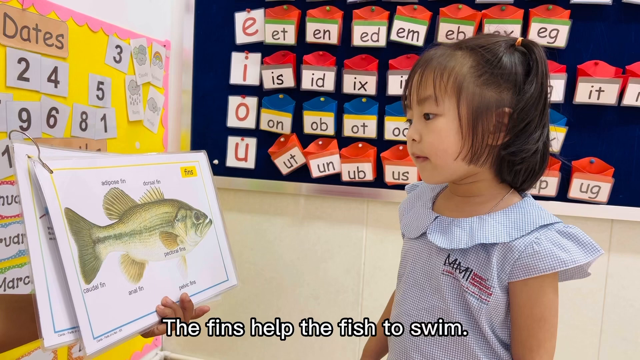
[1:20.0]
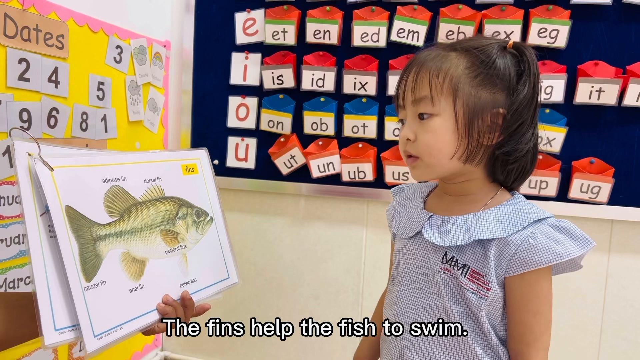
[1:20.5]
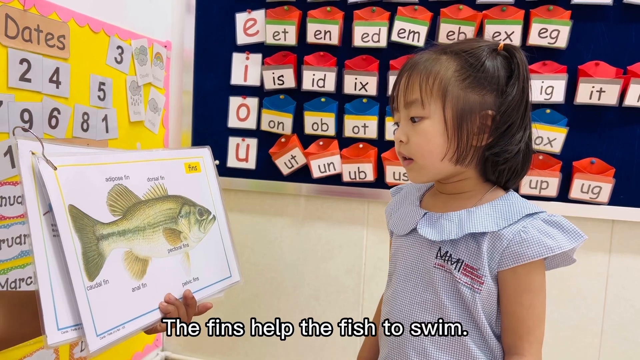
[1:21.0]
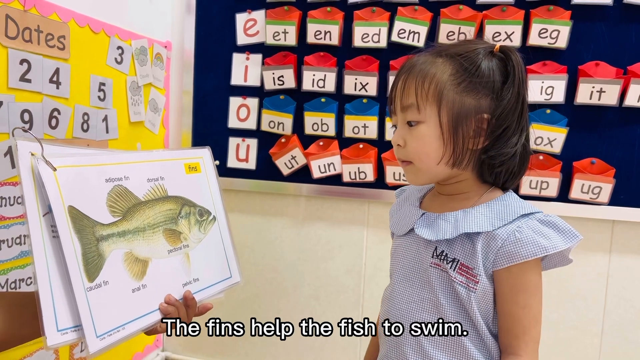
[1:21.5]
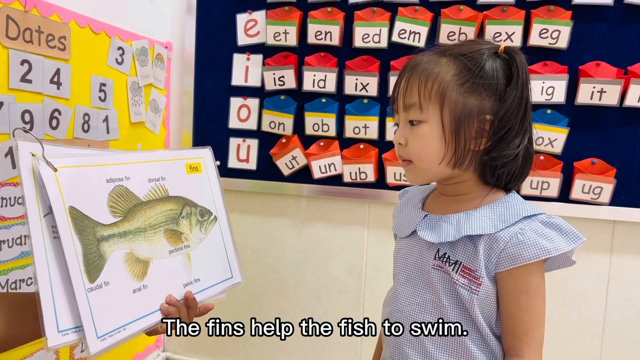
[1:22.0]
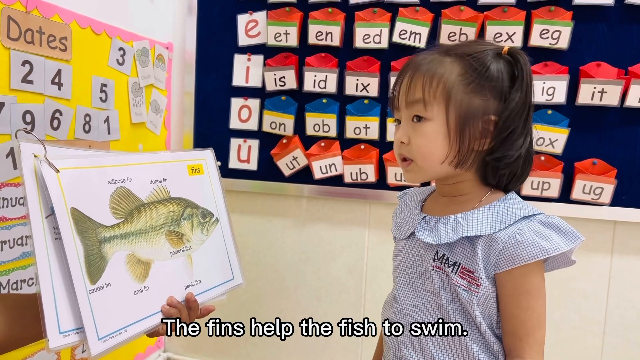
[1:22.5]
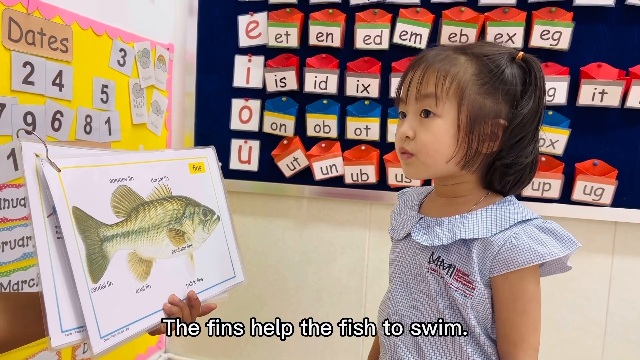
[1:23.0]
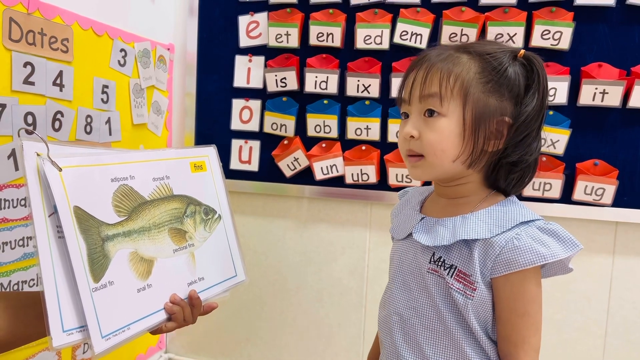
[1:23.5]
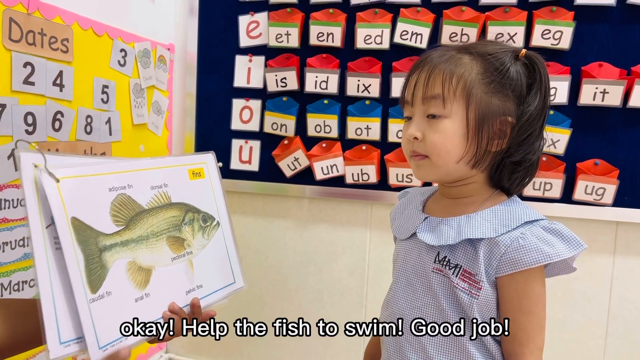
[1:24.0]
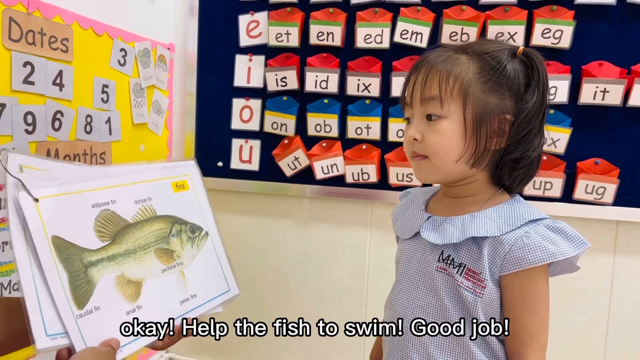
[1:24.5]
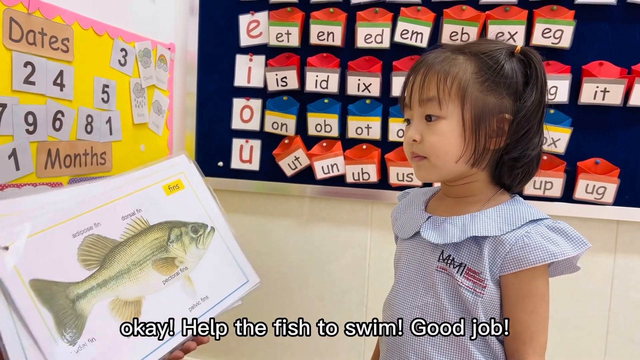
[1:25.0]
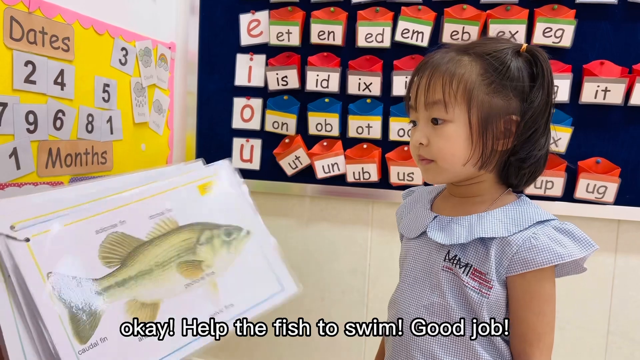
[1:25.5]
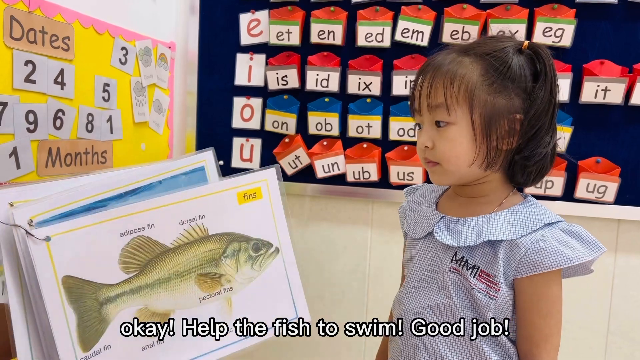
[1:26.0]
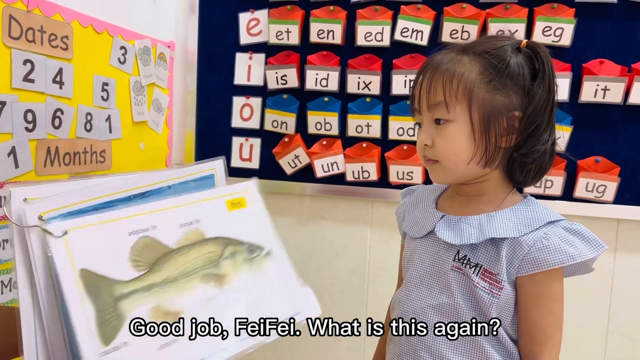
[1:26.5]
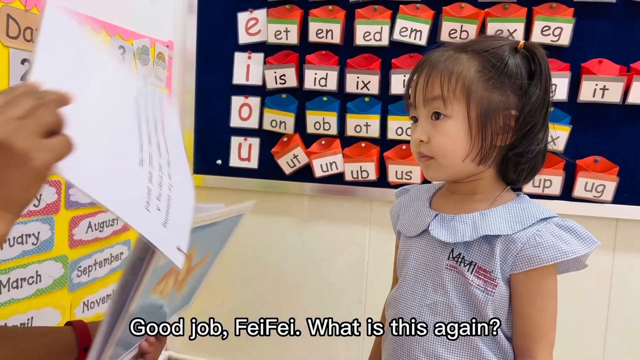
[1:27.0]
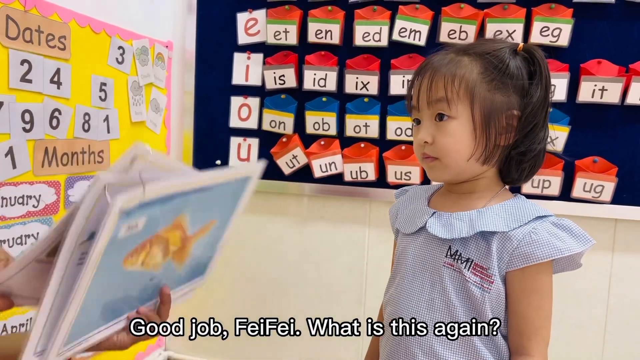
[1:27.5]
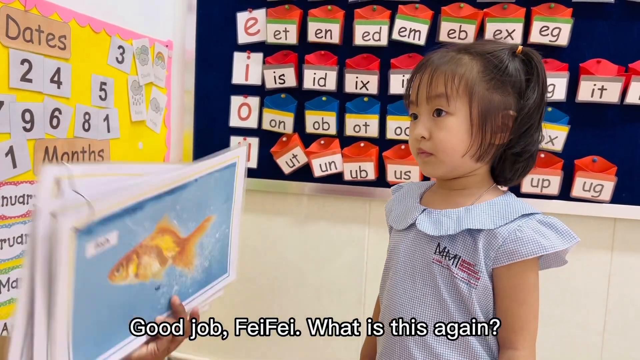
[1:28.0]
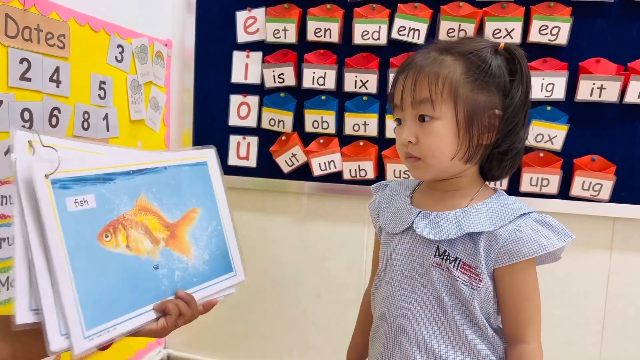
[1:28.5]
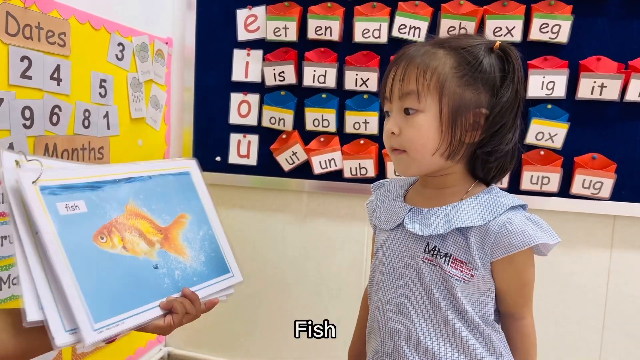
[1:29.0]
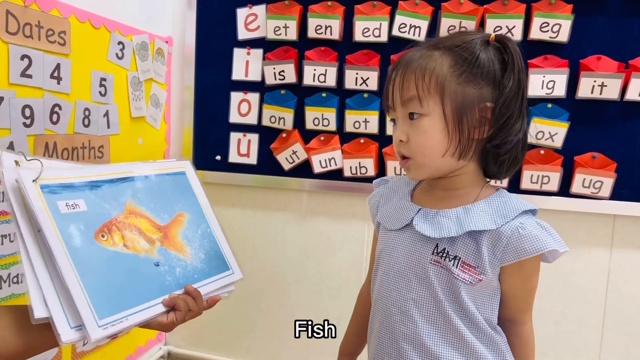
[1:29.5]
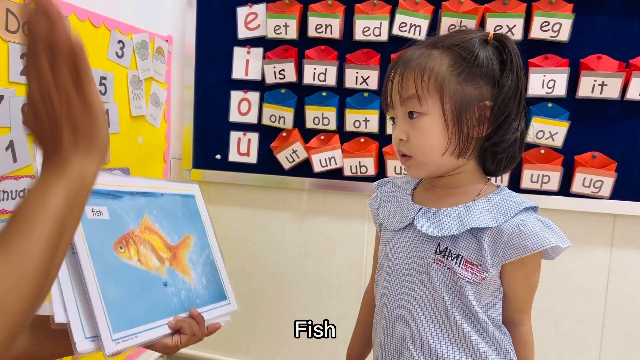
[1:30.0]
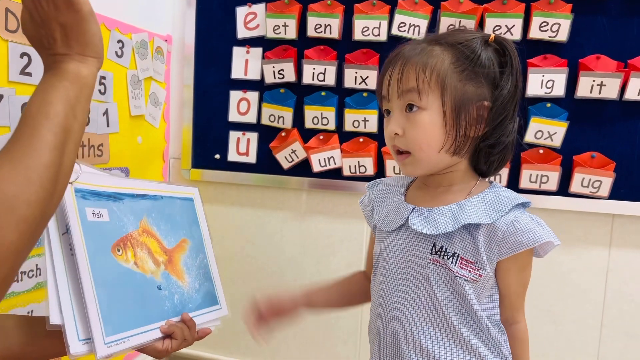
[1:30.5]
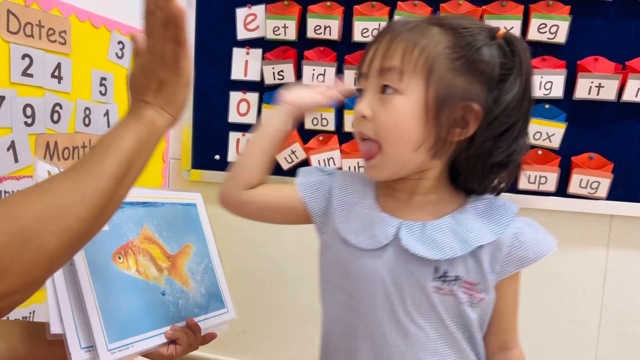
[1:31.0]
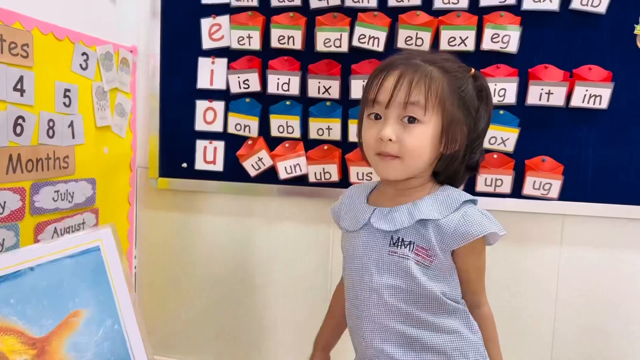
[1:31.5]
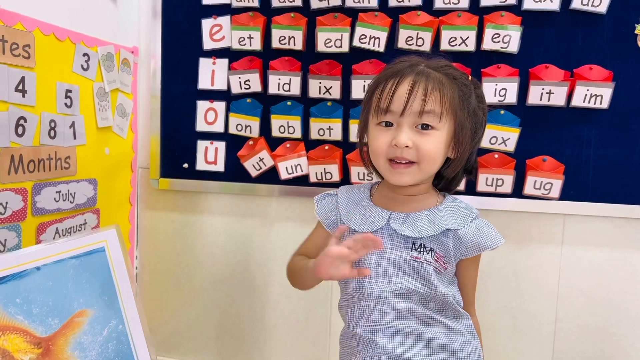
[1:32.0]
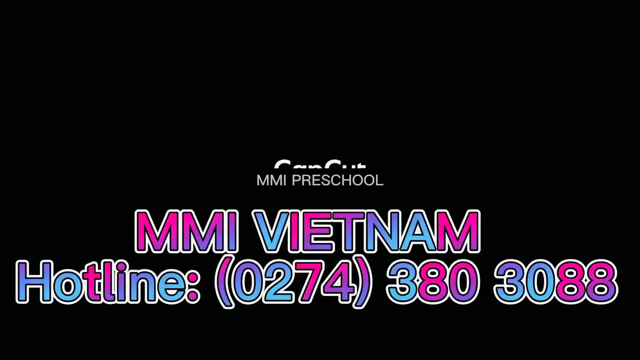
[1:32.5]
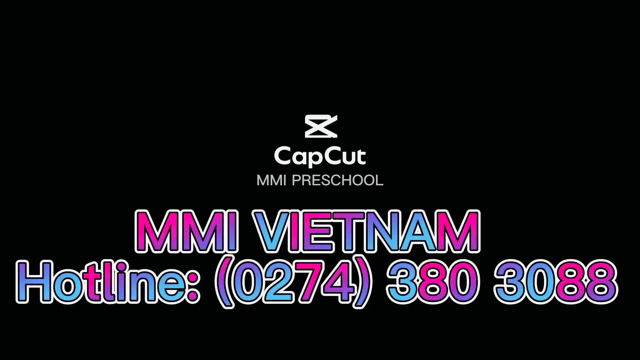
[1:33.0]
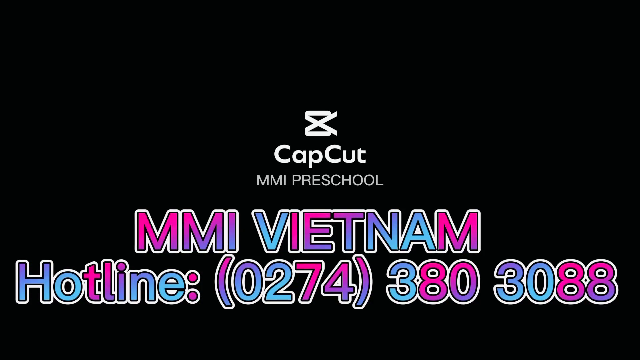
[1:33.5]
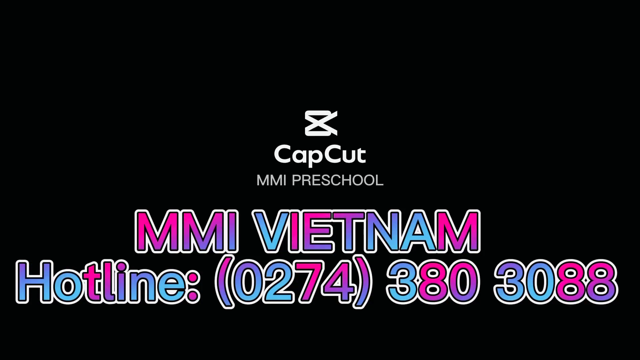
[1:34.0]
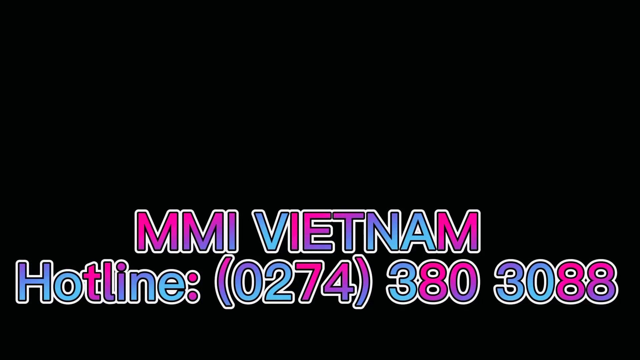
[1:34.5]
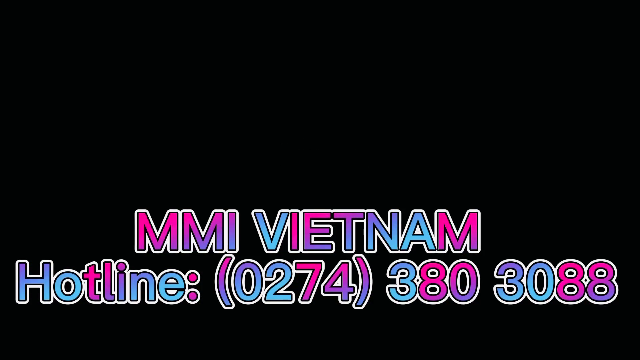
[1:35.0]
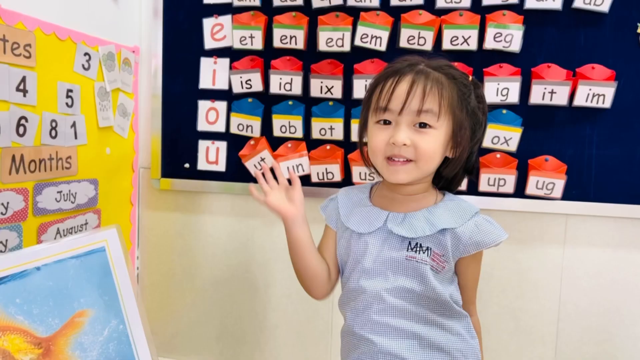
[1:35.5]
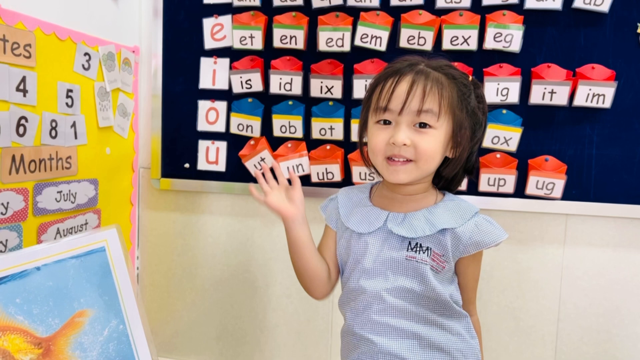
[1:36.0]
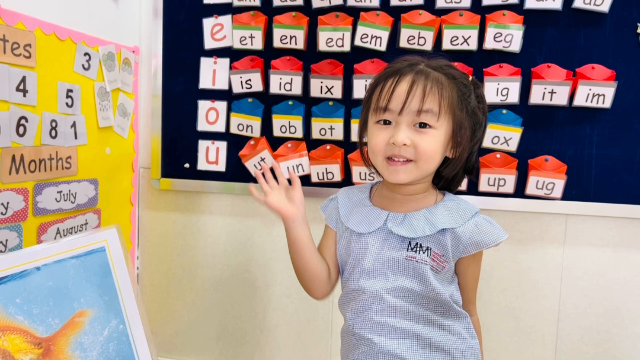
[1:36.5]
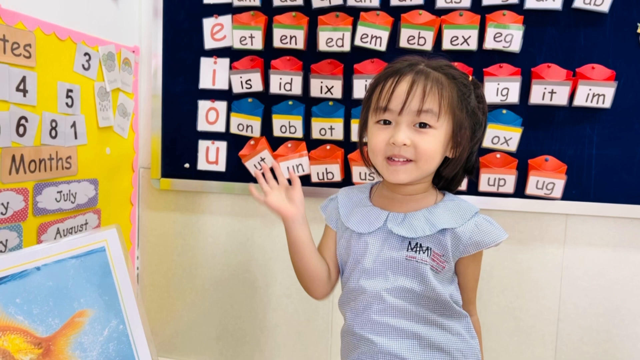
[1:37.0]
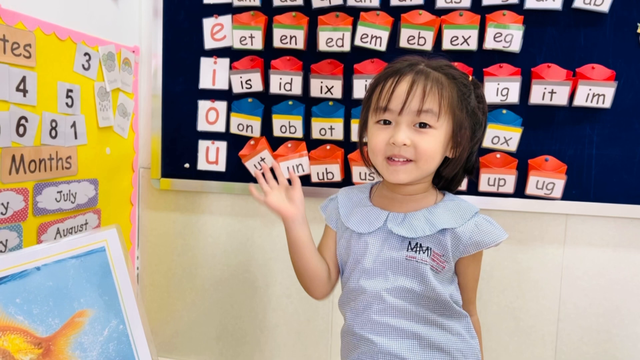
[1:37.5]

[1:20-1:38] The questions turn to what fins are for, and Fifi answers that they help the fish swim. The teacher turns to another page with a simple picture of a fish. The teacher and Fifi give each other a high five and both look very excited. Text then pops up explaining where Fifi goes to school: an English-teaching preschool in Vietnam. Her blue dress is a school uniform, with details on it matching the school's name. From this angle a necklace she is wearing is also visible.